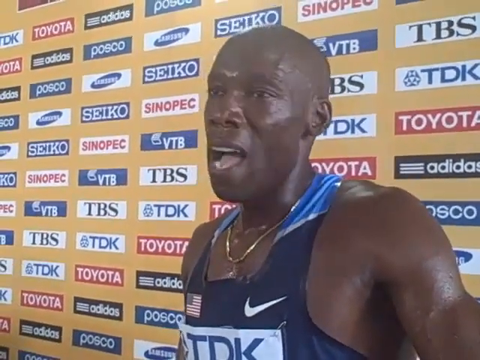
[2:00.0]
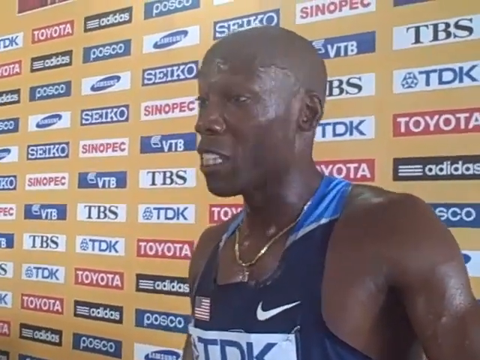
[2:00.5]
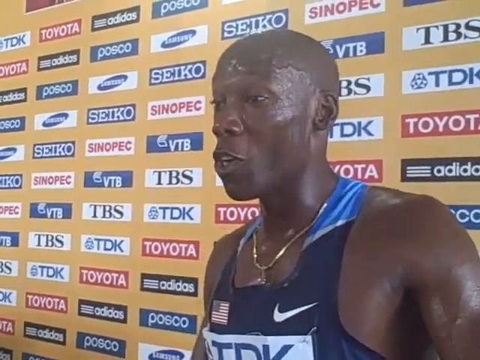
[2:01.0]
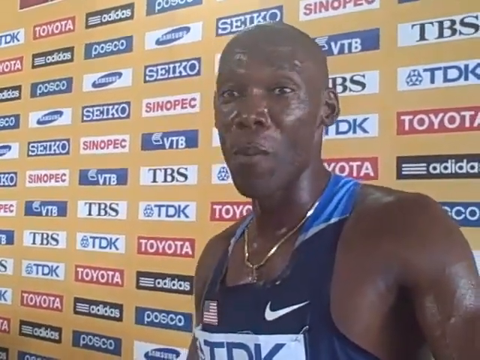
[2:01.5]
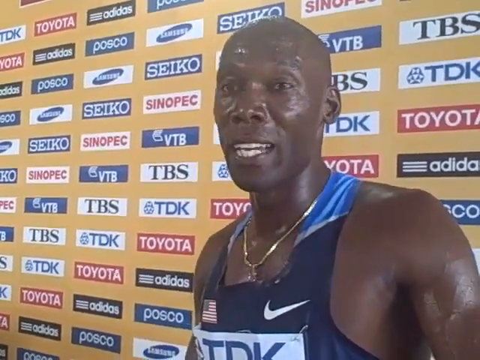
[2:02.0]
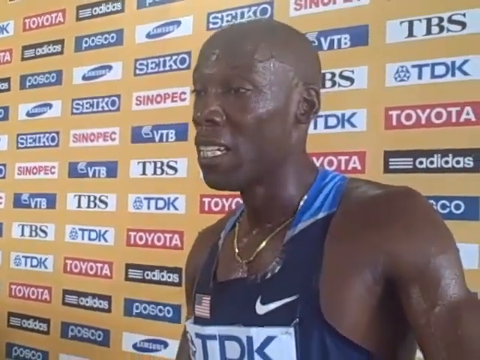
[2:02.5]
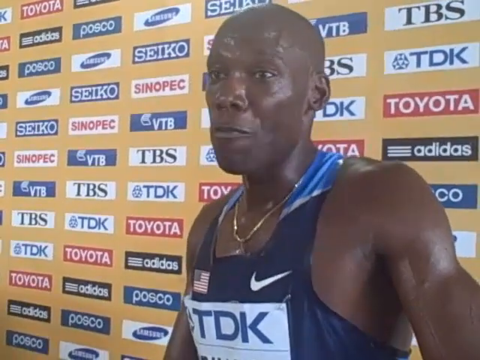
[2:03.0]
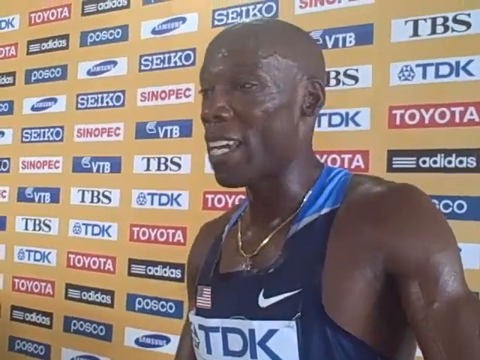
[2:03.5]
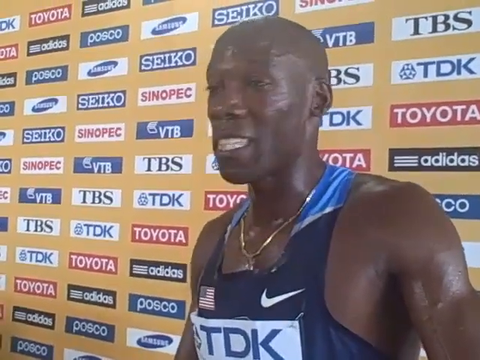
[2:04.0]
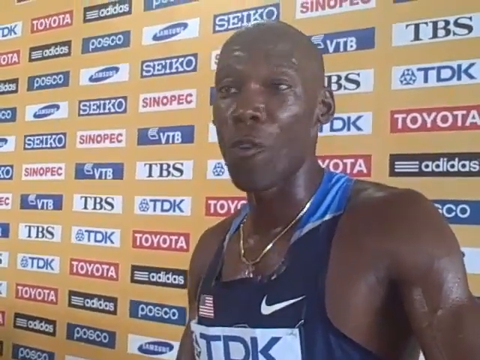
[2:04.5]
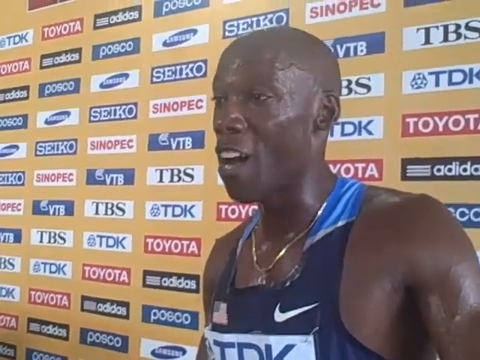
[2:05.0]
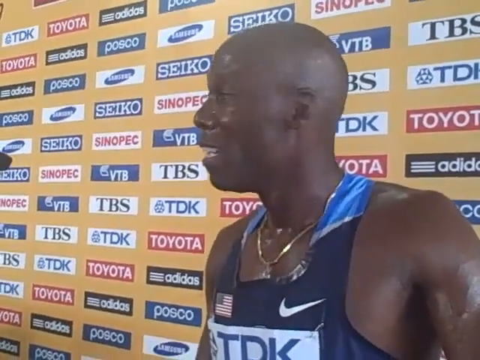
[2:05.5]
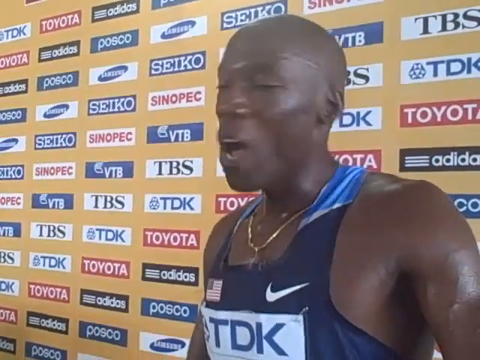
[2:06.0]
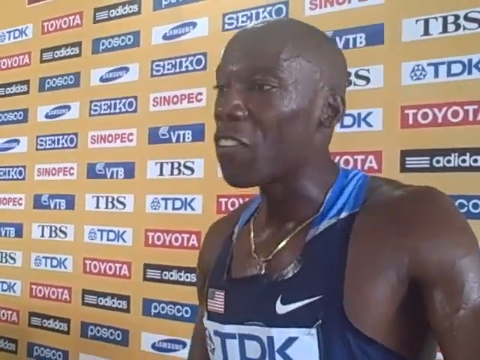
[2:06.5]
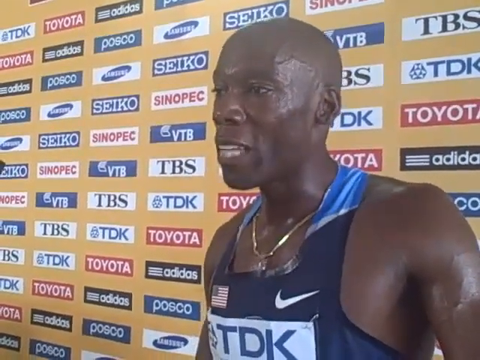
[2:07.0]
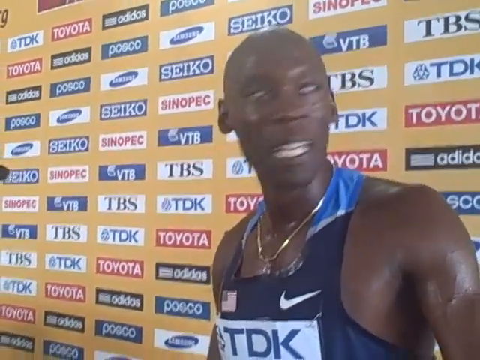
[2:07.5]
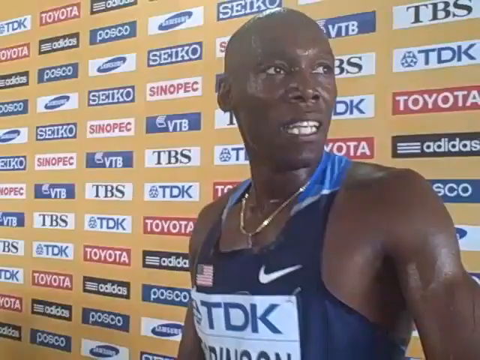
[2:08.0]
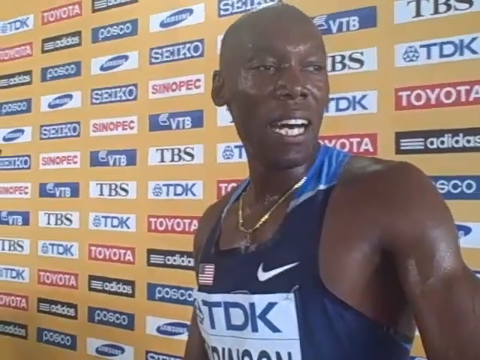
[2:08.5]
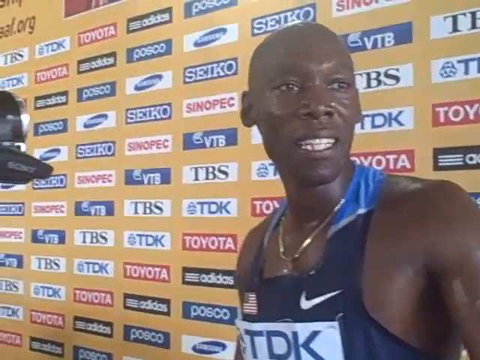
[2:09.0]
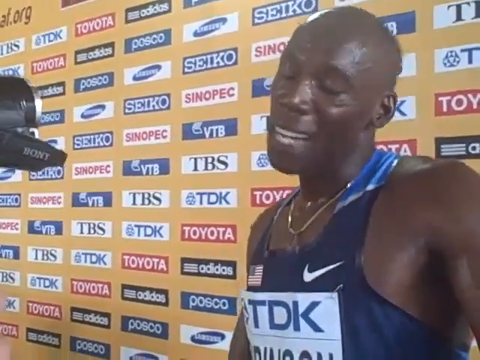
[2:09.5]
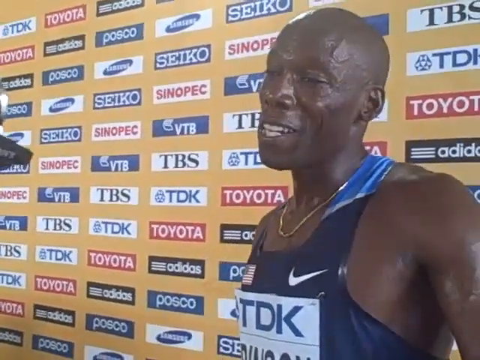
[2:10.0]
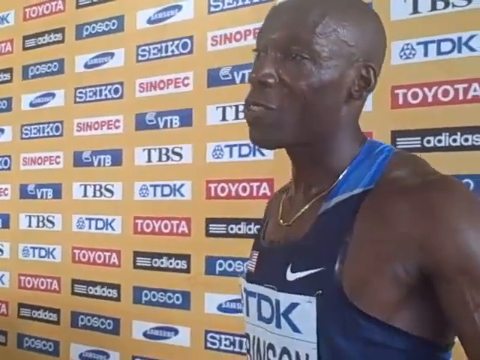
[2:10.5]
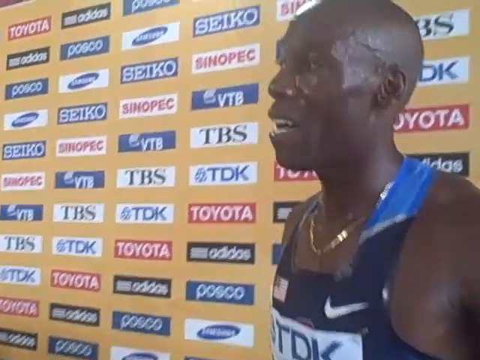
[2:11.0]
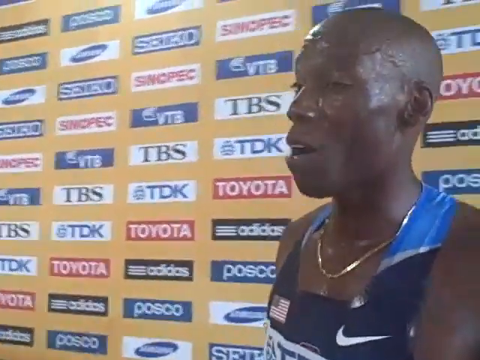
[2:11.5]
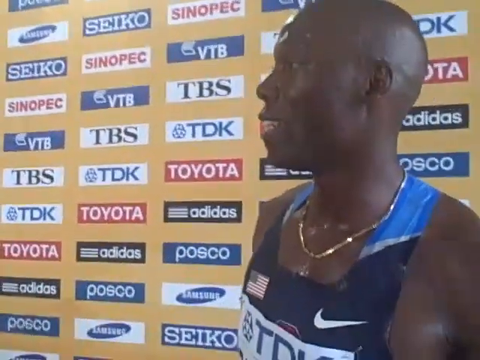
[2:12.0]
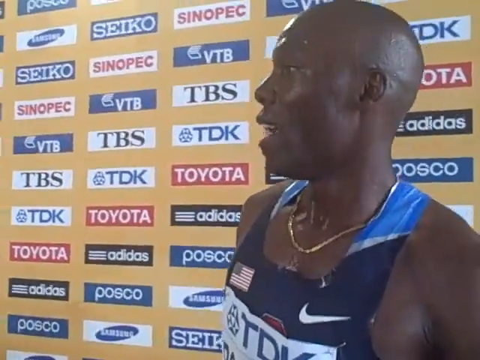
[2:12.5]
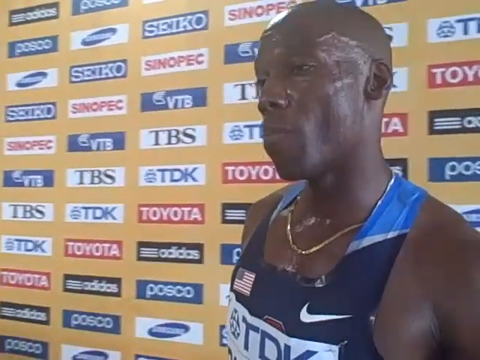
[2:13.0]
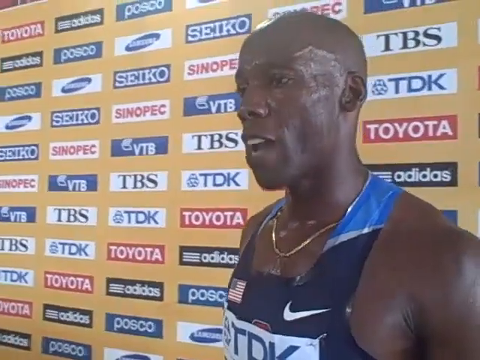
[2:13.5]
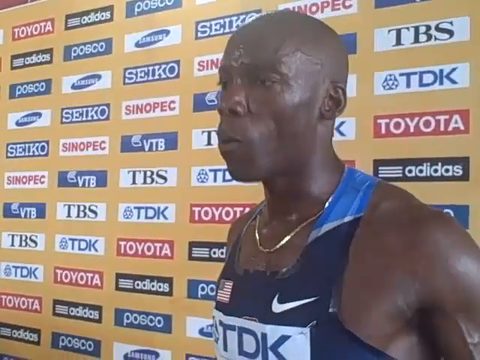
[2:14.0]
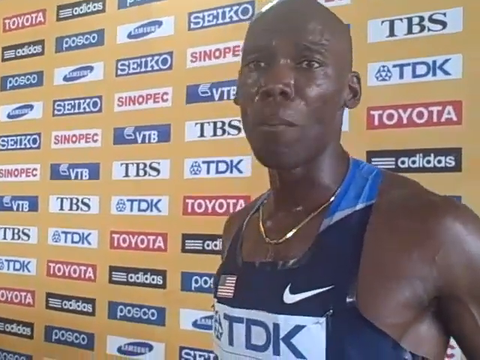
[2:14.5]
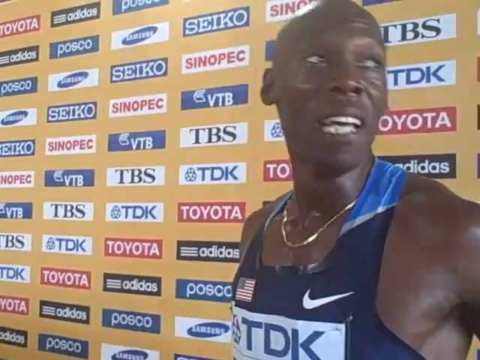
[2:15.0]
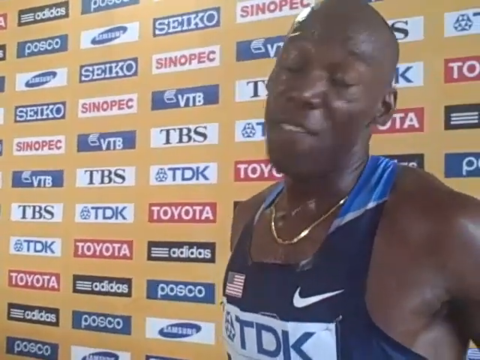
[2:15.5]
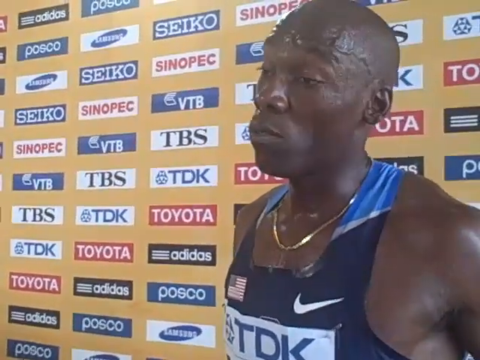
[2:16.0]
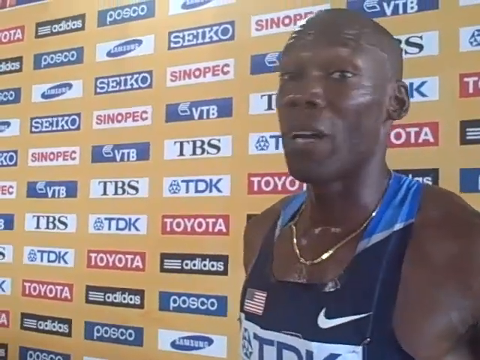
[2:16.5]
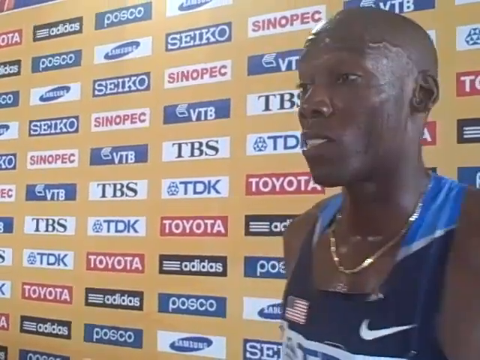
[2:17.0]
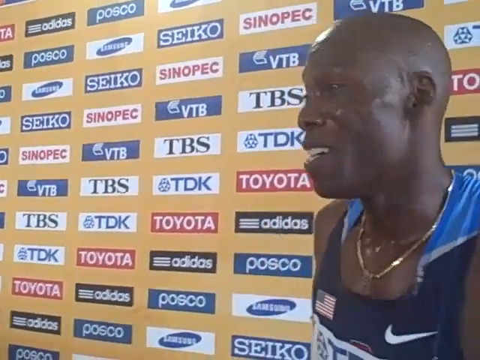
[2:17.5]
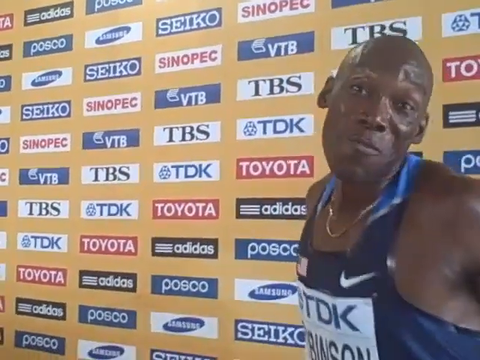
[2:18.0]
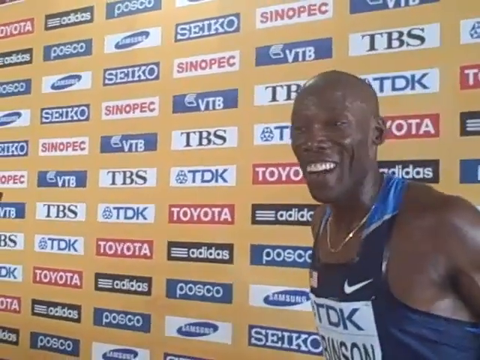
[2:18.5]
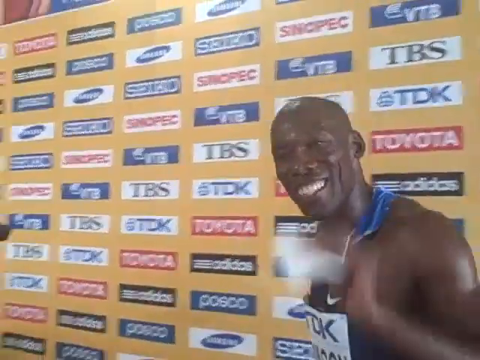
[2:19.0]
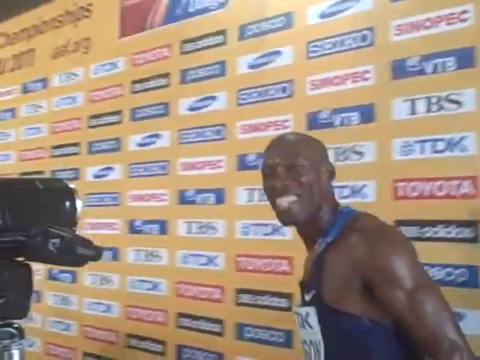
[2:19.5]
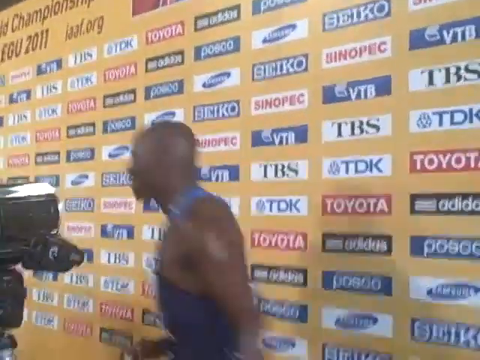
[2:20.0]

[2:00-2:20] He keeps talking, opening his mouth and talking back and forth, and briefly looks to his right side, looking kind of agitated. The camera recording him is briefly visible: it looks to be a Sony camcorder, black, with a silver lens case, and the lens cover can kind of be seen popping down. At the very end of the interview he starts to smile and gestures goodbye with his left hand. He looks towards his right side and talks a little more calmly, then sort of shrugs his left shoulder and waves his left hand, which looks like it holds a piece of paper or something, at the cameraman. He smiles widely and walks away.